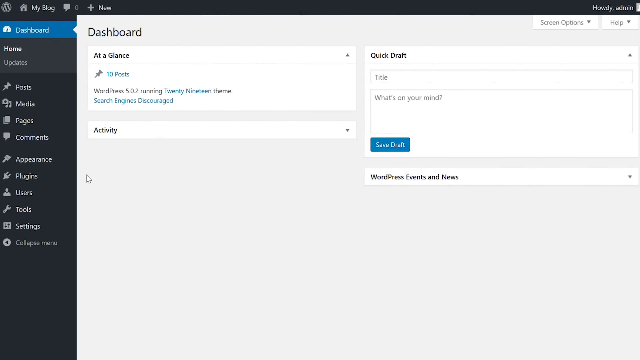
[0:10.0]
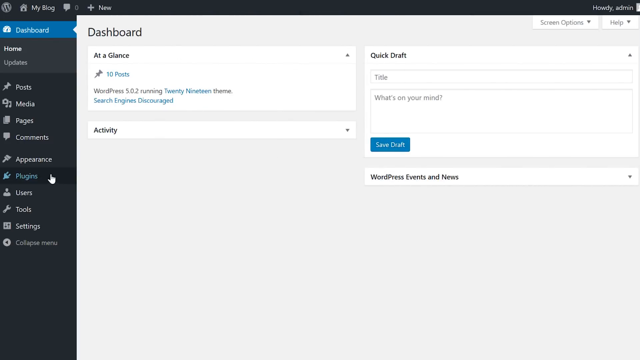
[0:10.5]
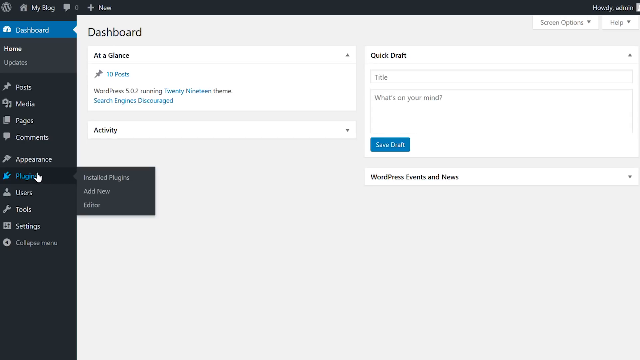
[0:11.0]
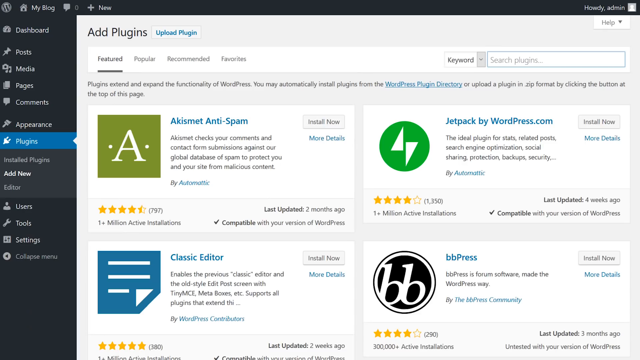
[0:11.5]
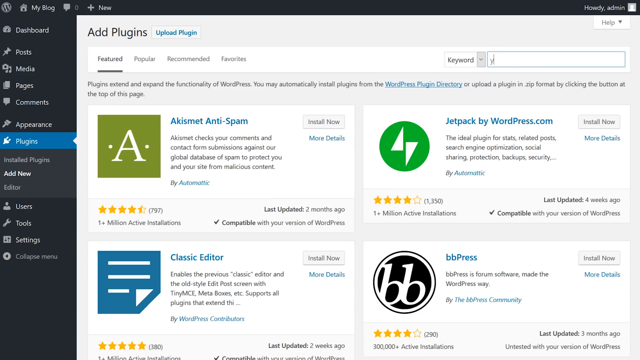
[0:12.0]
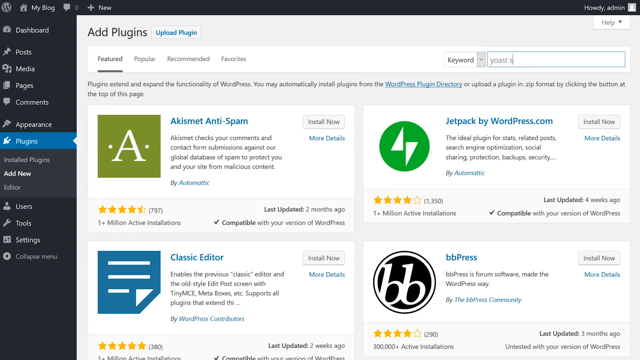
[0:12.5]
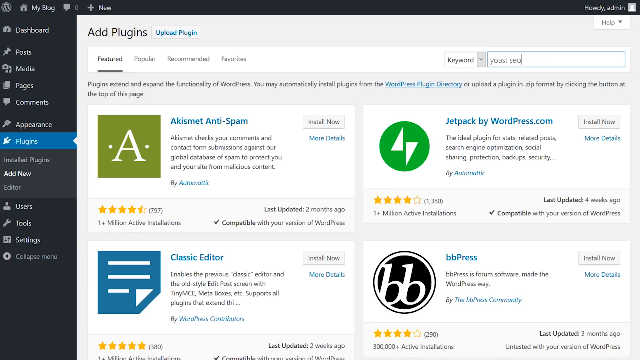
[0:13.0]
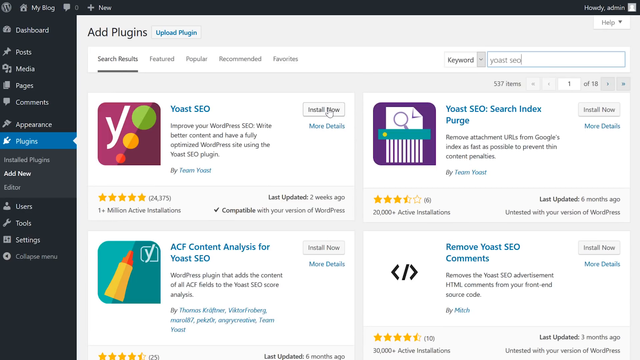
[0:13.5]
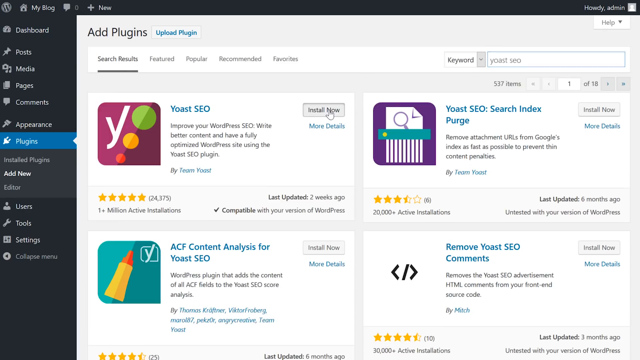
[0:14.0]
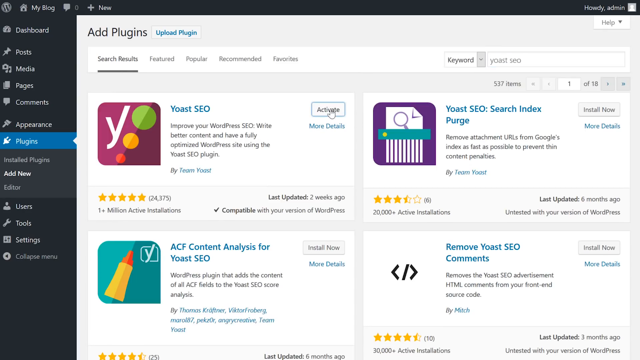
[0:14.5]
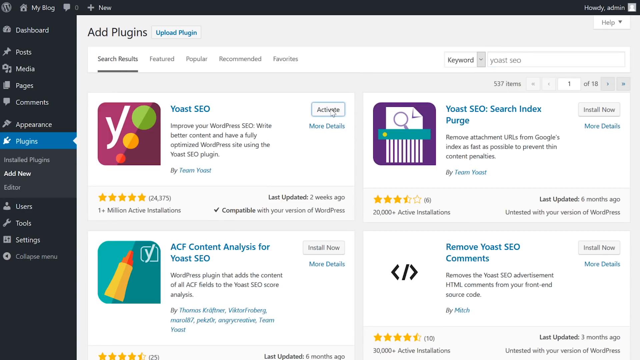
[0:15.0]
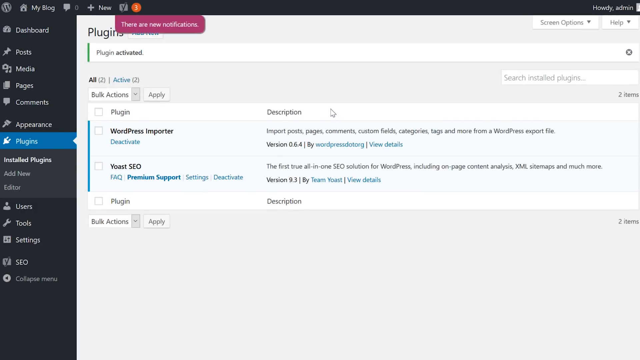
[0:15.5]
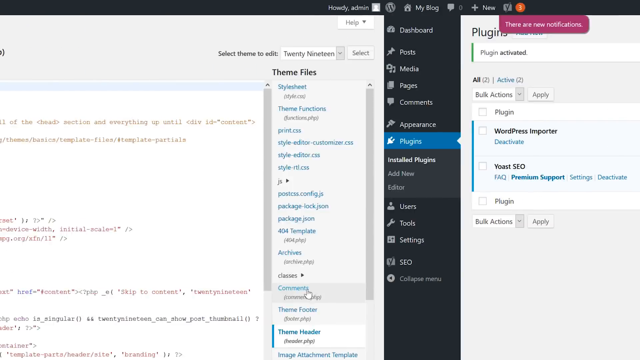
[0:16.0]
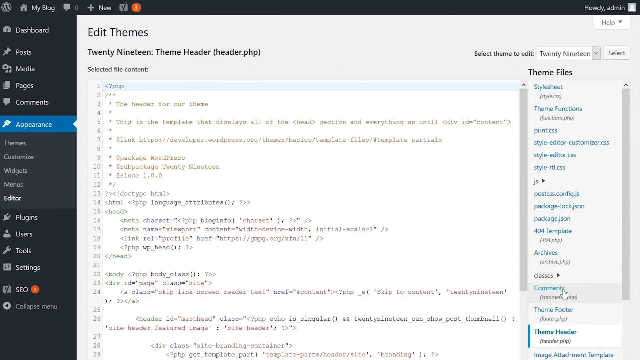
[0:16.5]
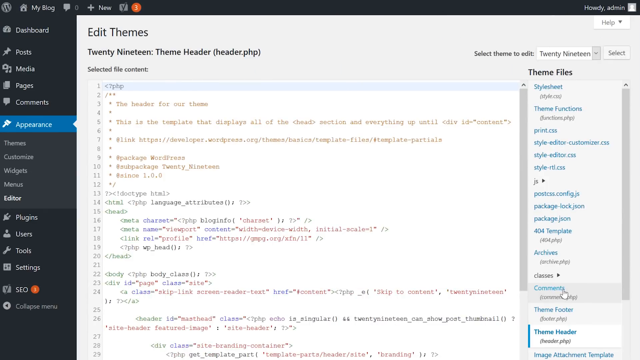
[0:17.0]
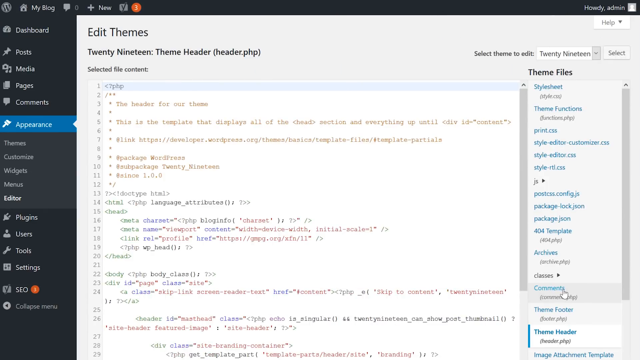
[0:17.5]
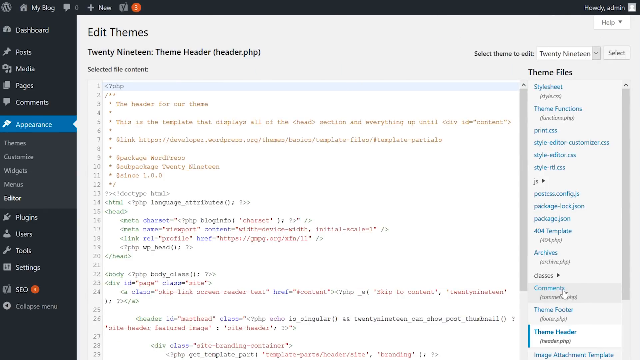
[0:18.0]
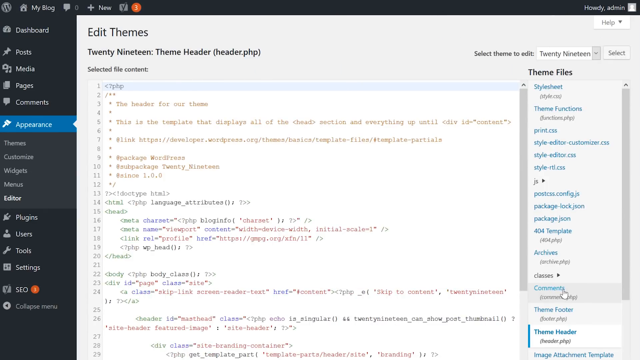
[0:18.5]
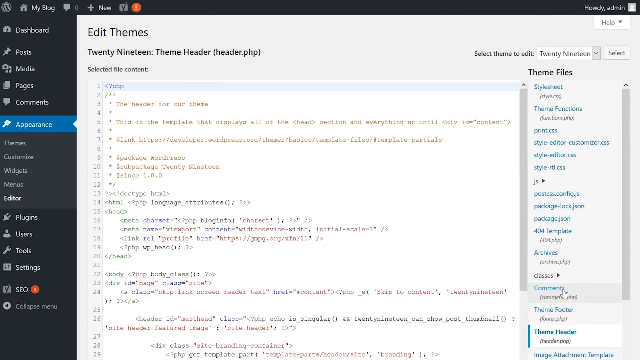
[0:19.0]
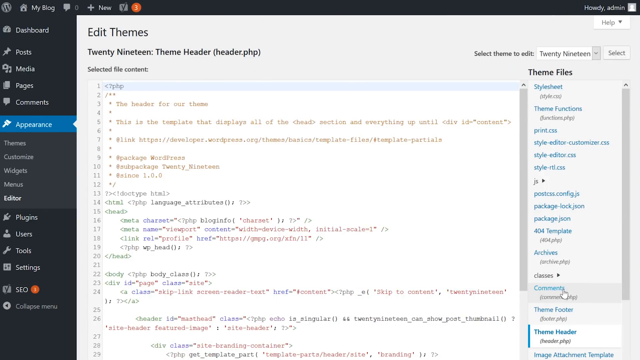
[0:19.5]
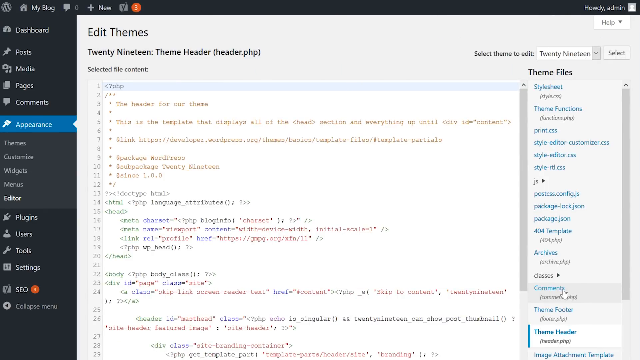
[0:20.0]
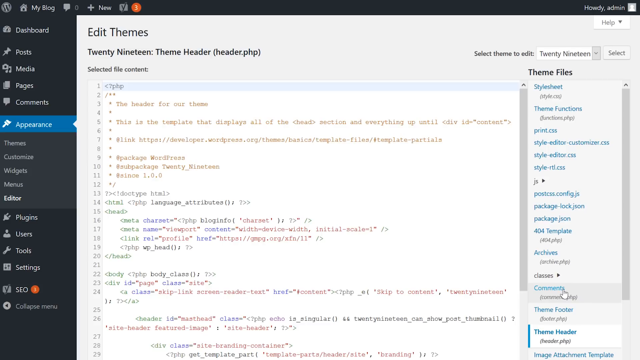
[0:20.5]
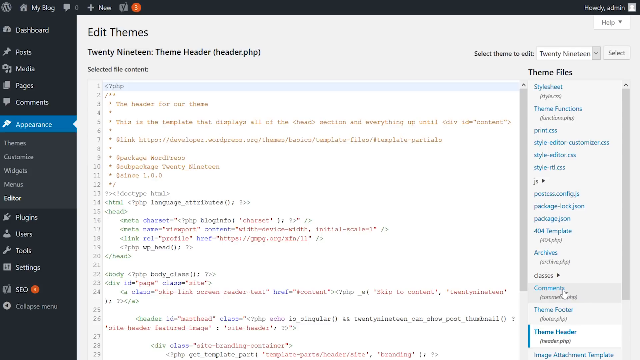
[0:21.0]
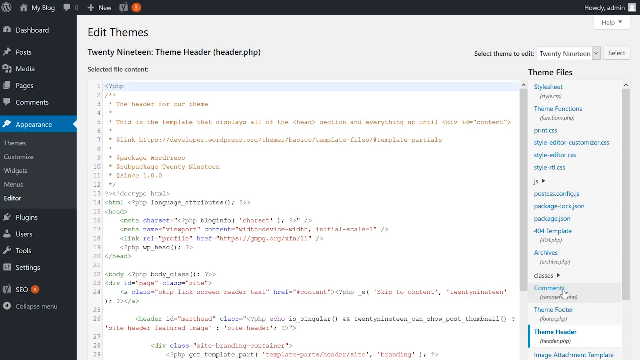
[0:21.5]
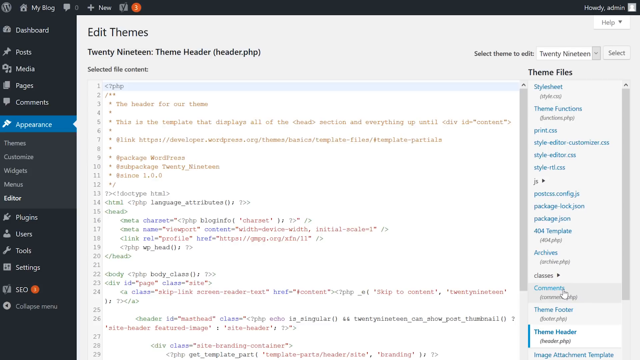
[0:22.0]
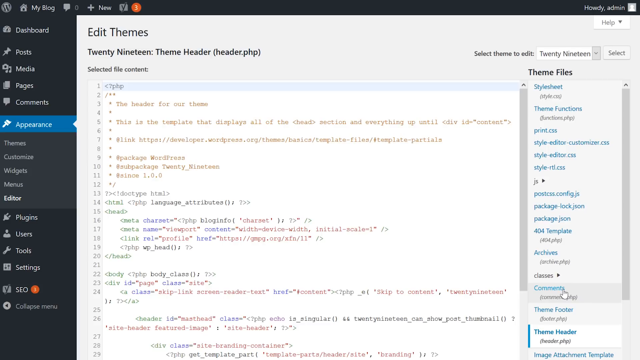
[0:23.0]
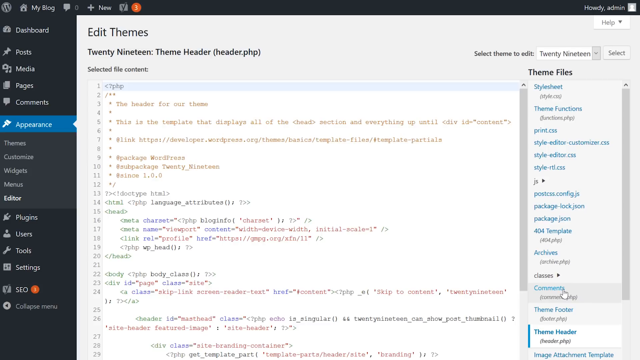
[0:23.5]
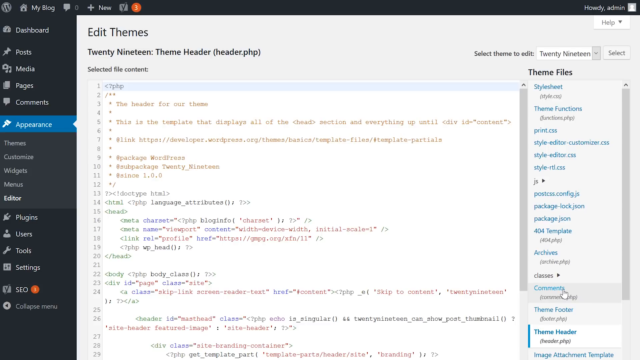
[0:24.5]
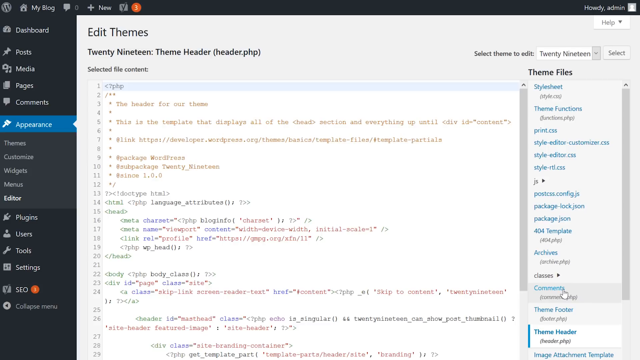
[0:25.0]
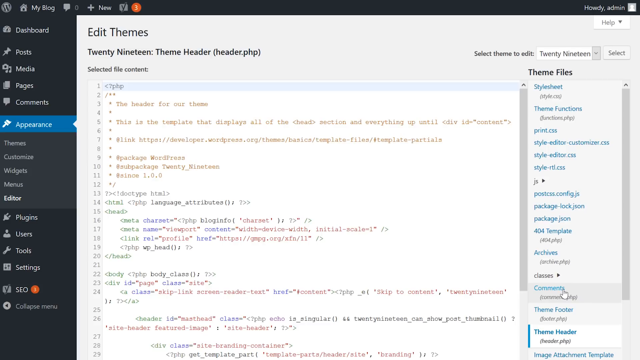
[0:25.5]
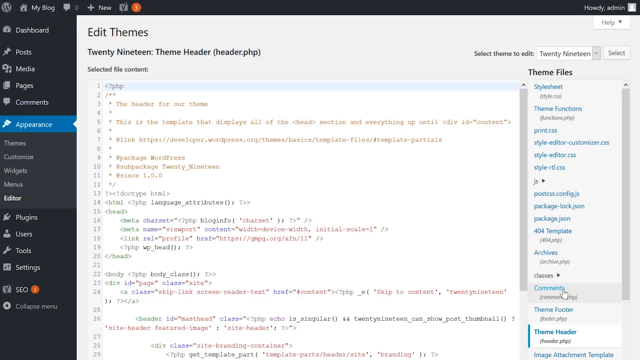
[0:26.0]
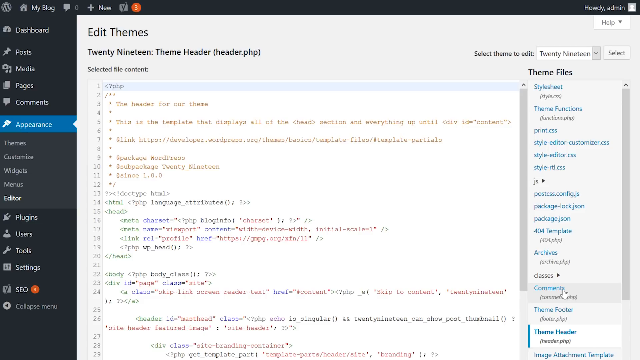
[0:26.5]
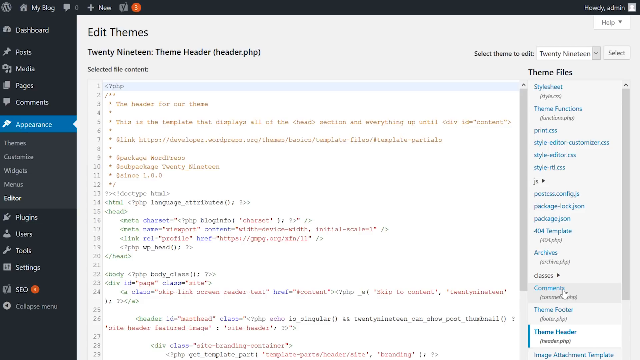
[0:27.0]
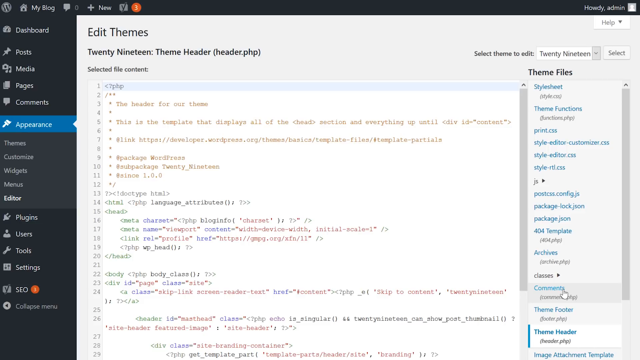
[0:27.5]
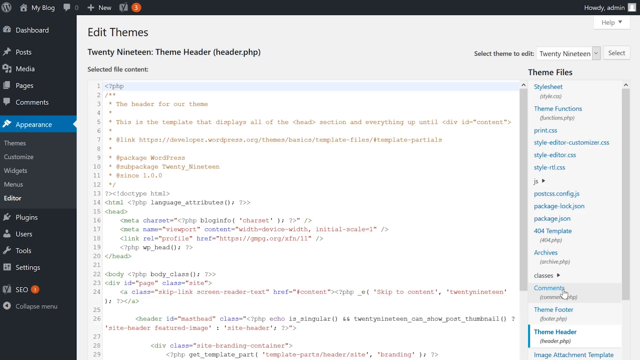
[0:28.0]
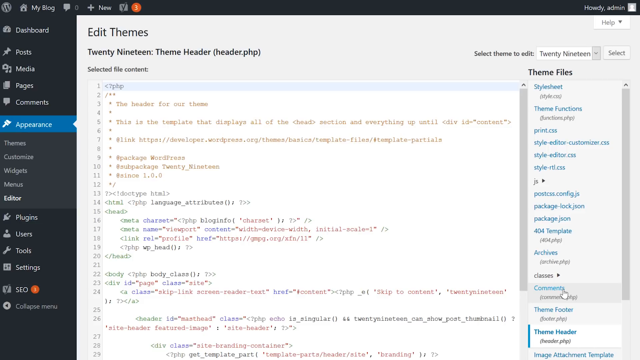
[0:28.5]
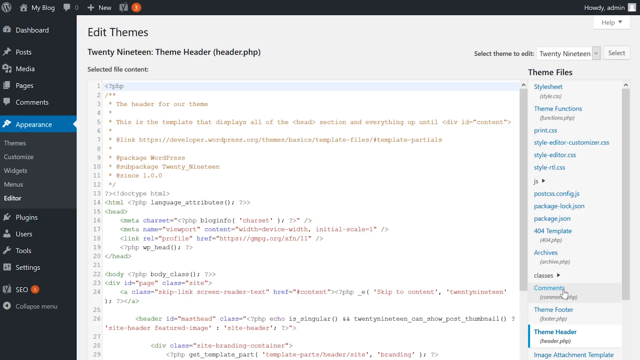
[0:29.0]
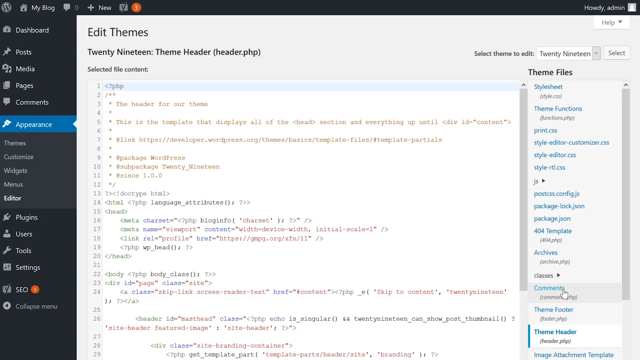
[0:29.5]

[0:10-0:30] The user moves the cursor down to the plug-in section in the sidebar menu on the left and clicks it, bringing up an add plug-in section with featured plug-ins and a search bar. They search for Yoast SEO, and a range of options appears. They click the install now button beside the Yoast SEO plug-in; once it installs, the button turns to activate, and they click that. A new screen opens under the plug-in section that says "plug-in activated", and a small pink box pops up in the top corner saying "there are new notifications". The screen then slides to the right, showing the same dashboard, this time under the appearance tab on the left side, where an edit theme section shows a script in the middle of the screen.